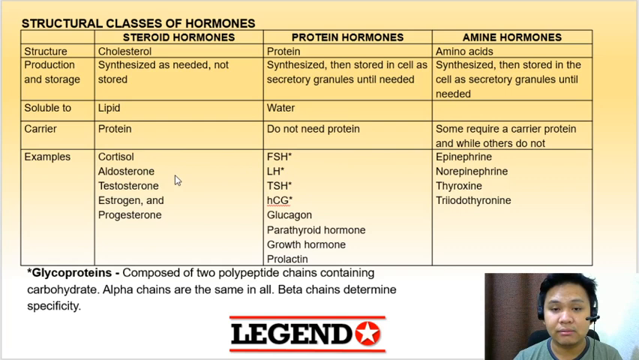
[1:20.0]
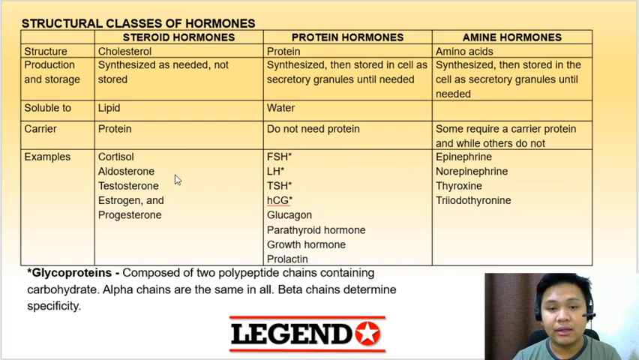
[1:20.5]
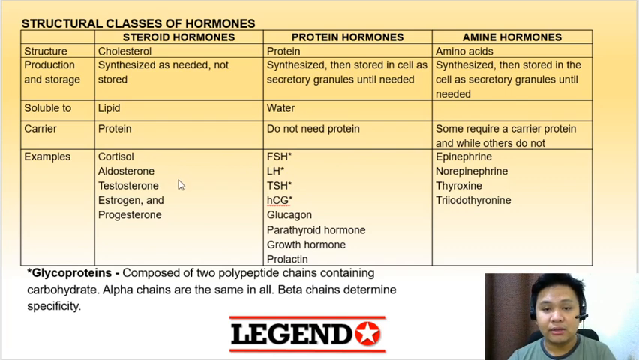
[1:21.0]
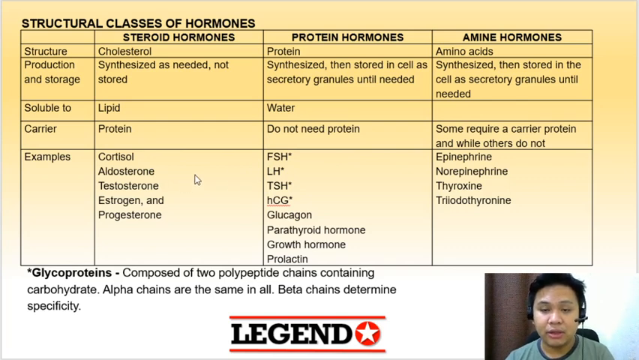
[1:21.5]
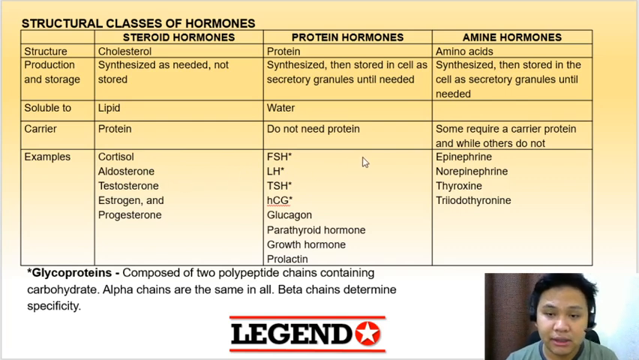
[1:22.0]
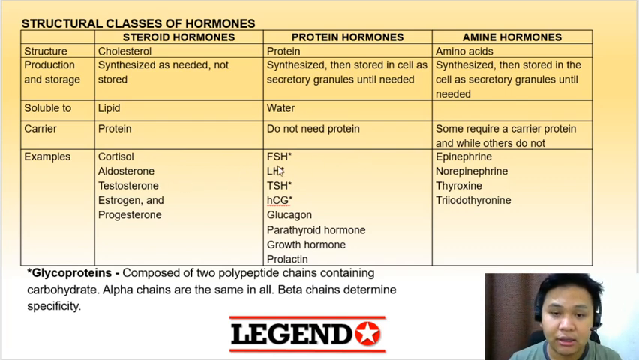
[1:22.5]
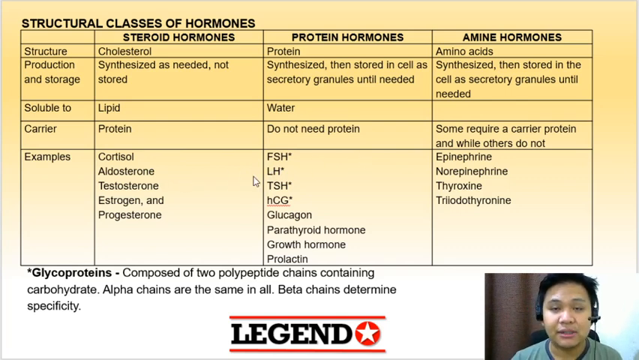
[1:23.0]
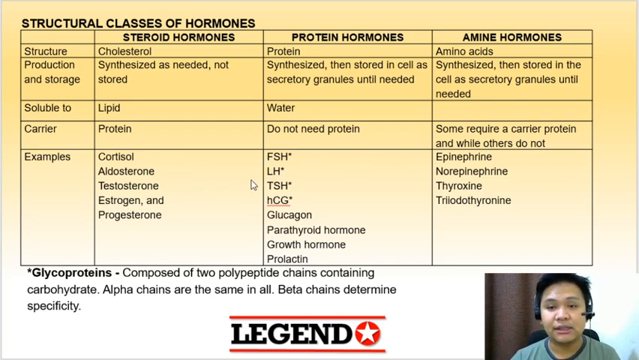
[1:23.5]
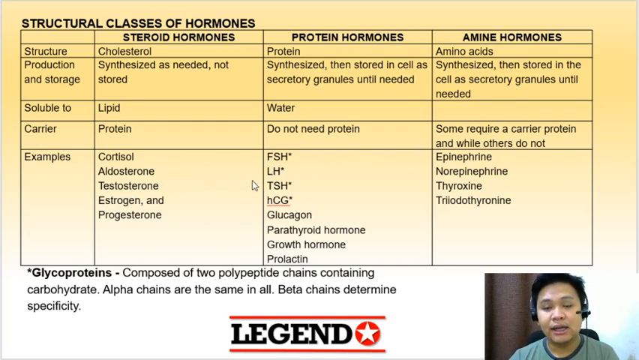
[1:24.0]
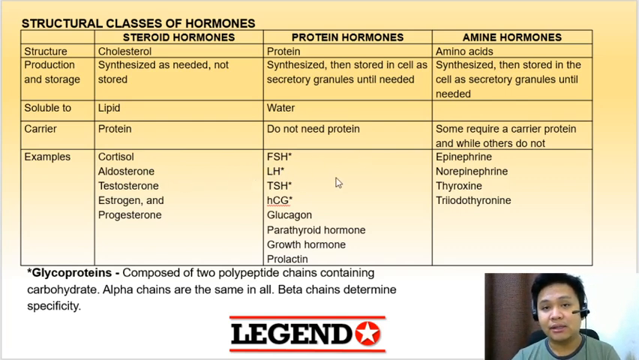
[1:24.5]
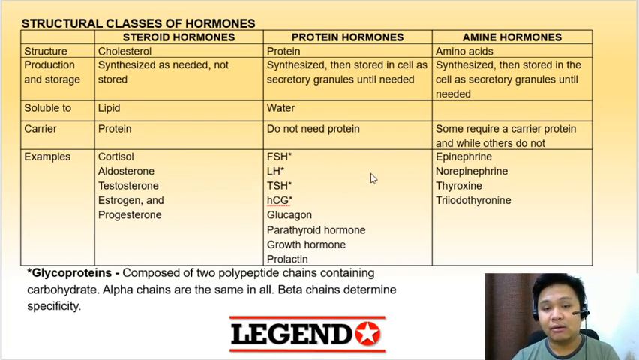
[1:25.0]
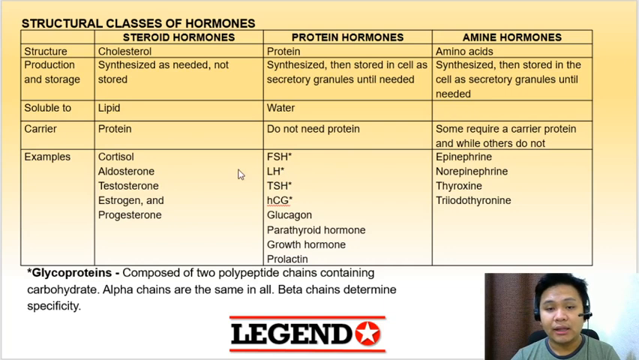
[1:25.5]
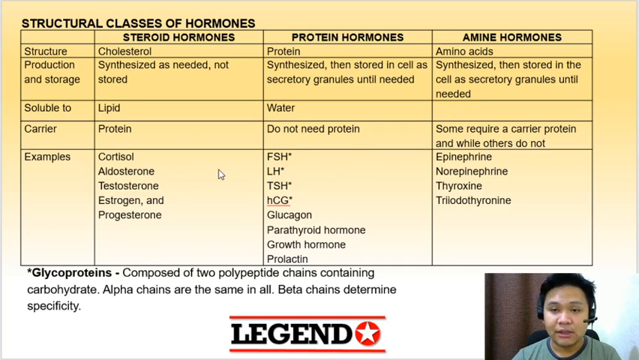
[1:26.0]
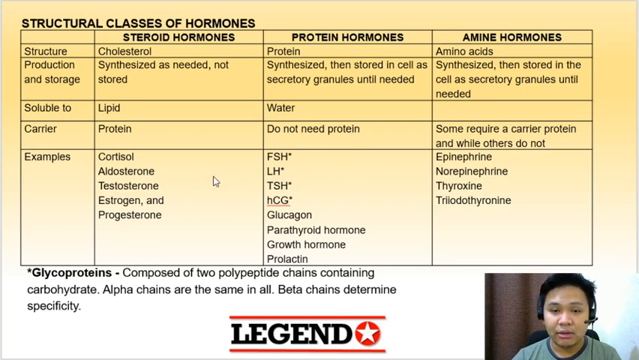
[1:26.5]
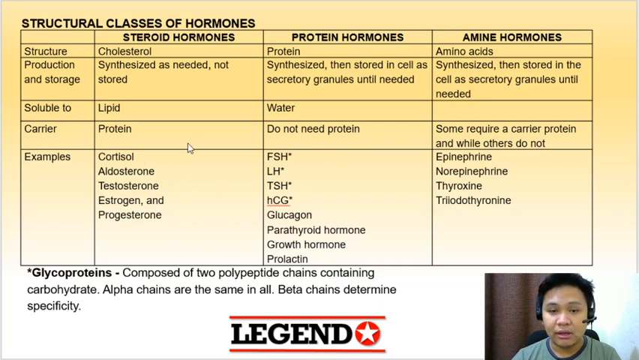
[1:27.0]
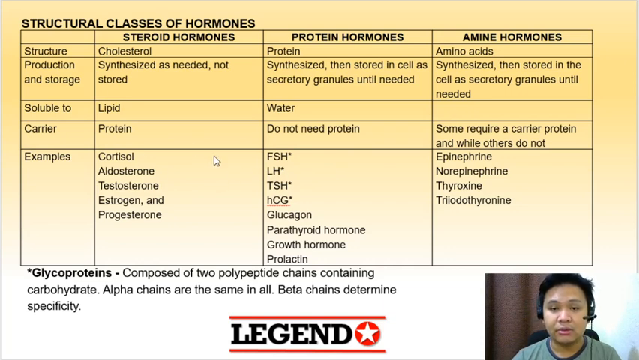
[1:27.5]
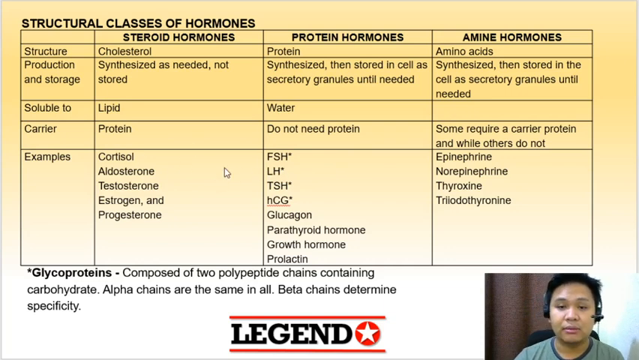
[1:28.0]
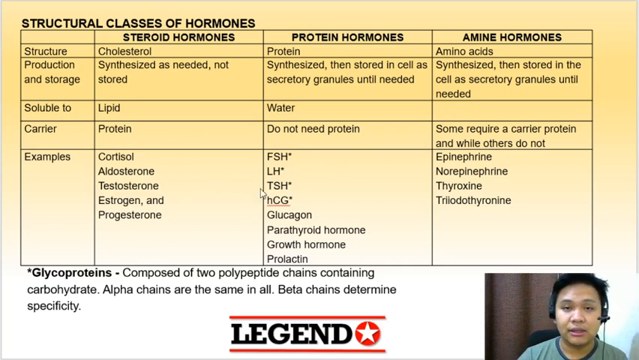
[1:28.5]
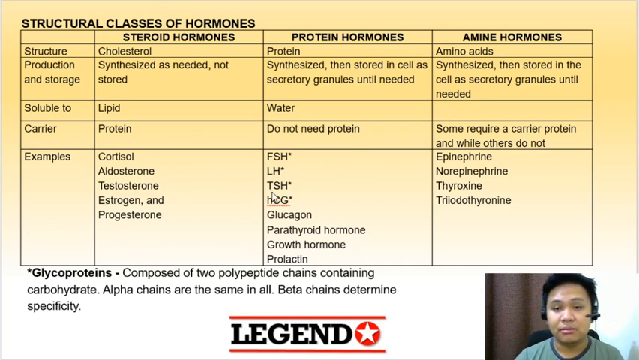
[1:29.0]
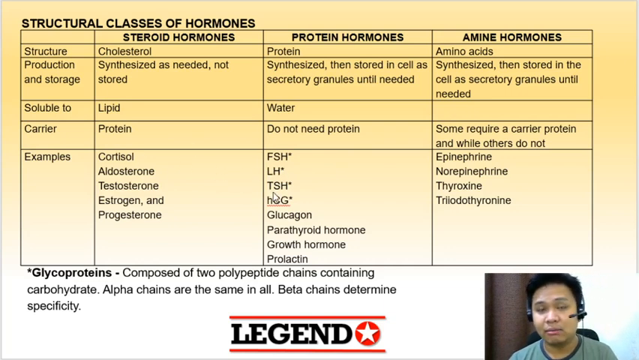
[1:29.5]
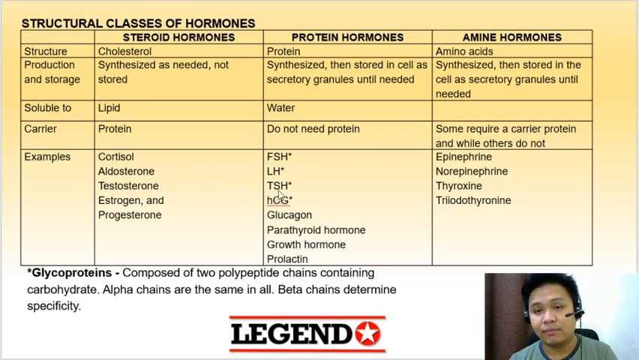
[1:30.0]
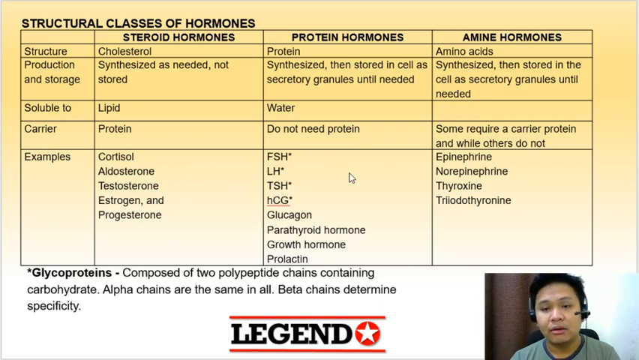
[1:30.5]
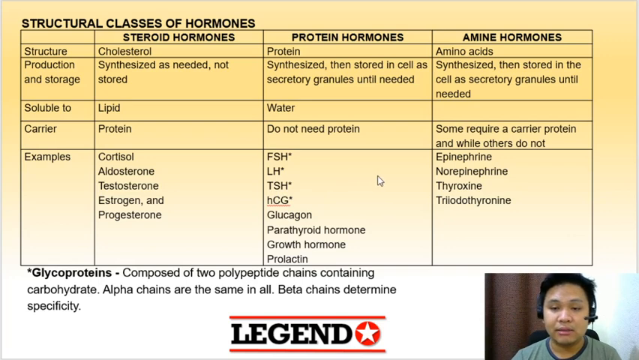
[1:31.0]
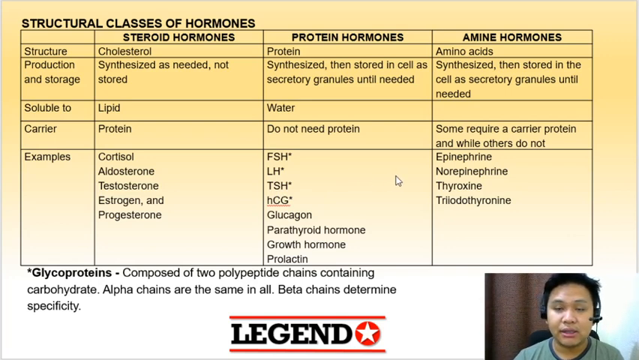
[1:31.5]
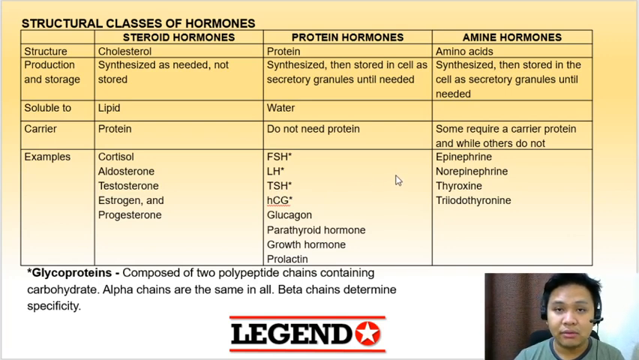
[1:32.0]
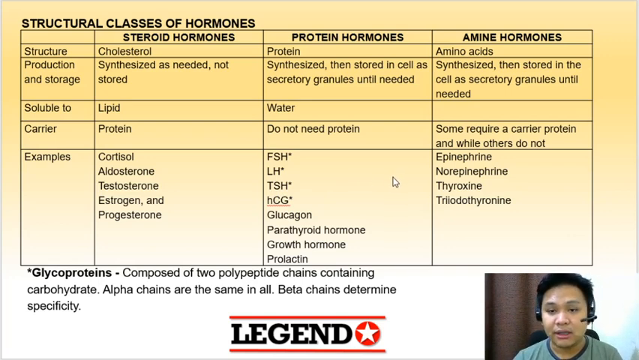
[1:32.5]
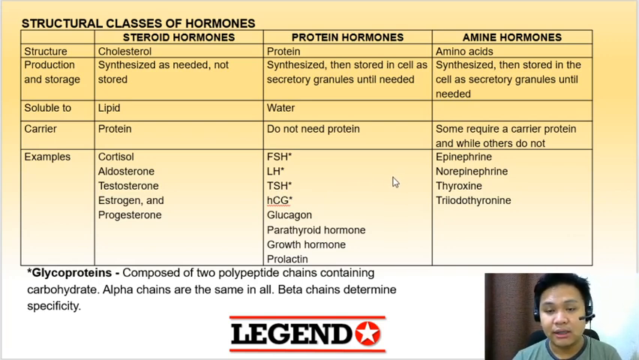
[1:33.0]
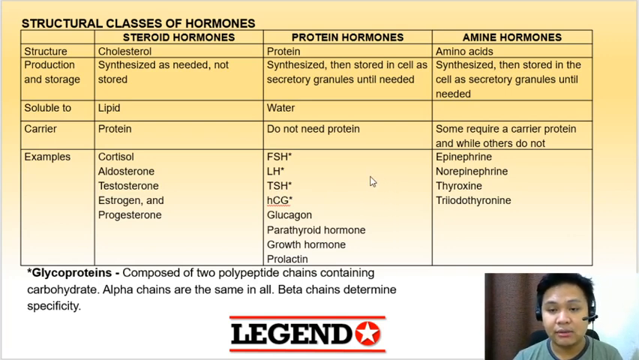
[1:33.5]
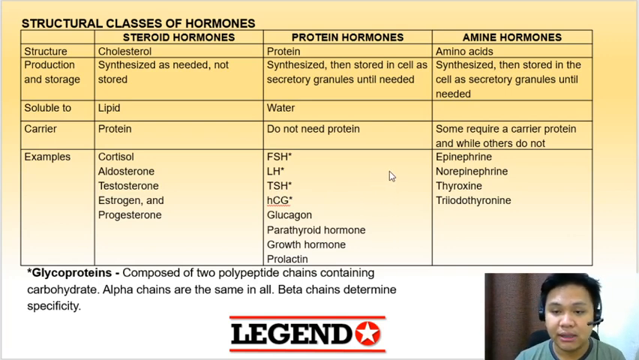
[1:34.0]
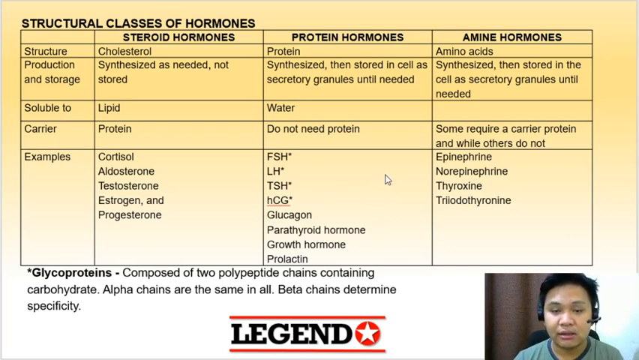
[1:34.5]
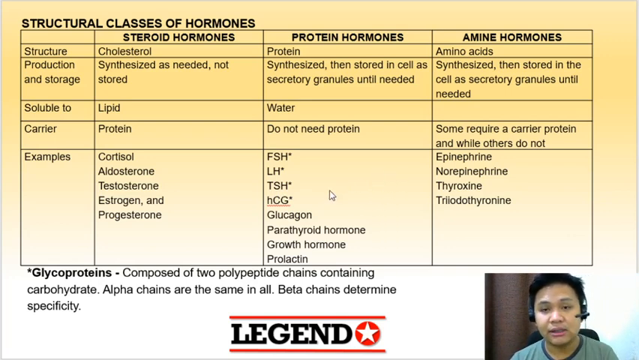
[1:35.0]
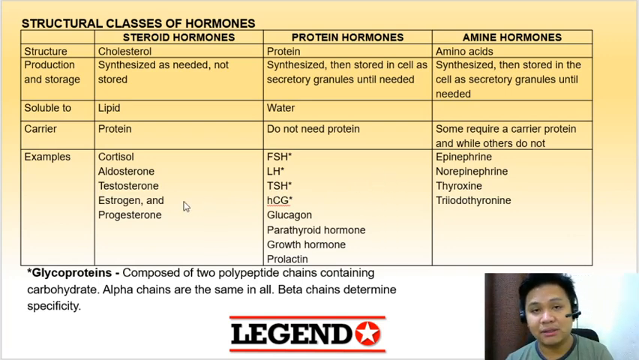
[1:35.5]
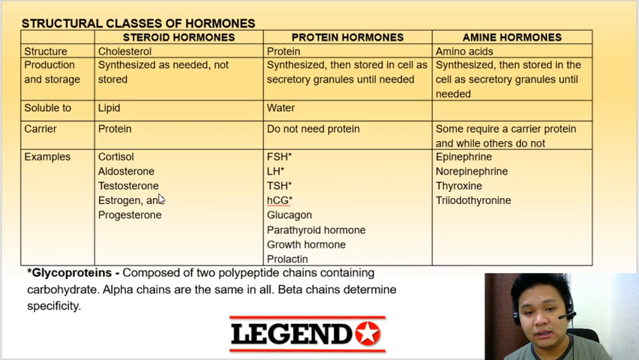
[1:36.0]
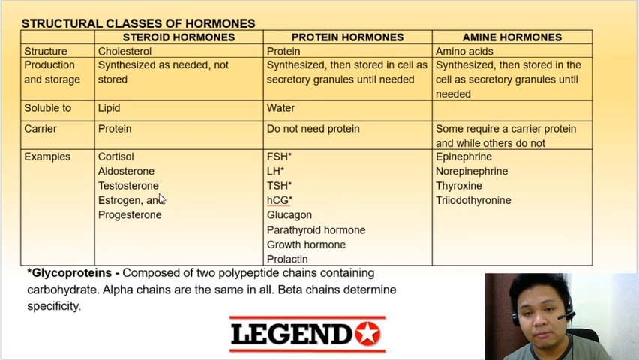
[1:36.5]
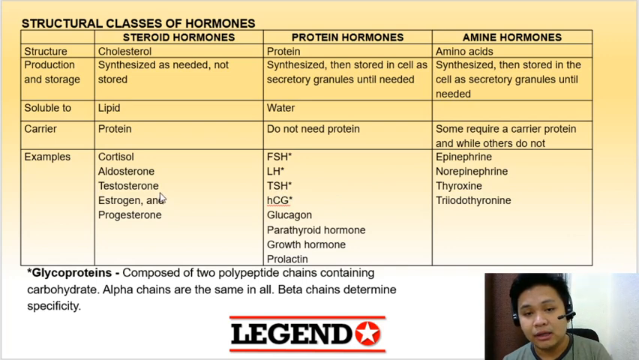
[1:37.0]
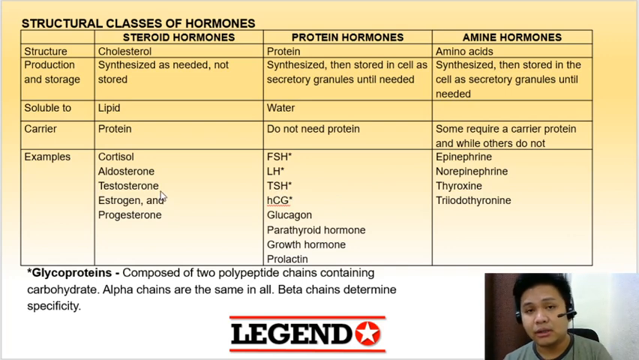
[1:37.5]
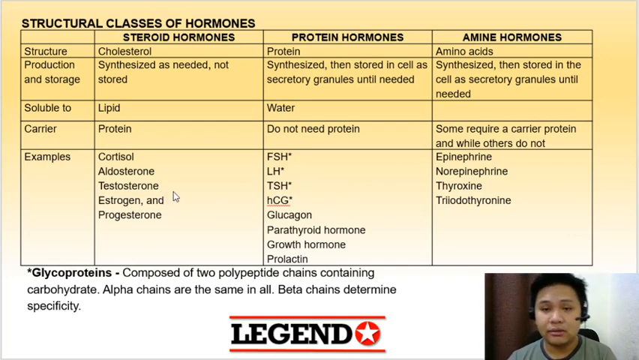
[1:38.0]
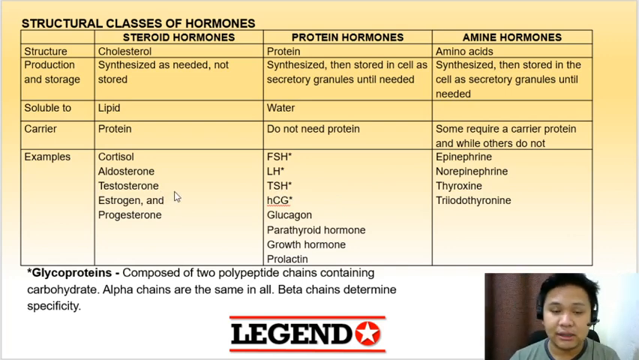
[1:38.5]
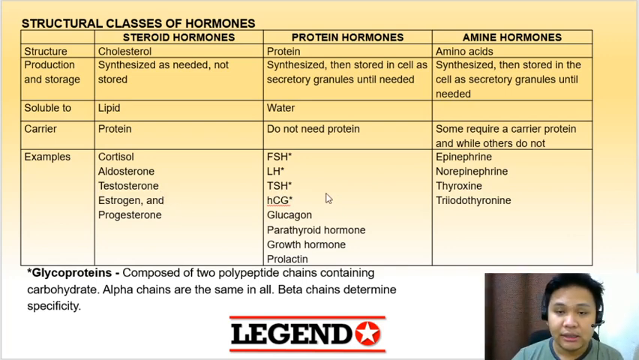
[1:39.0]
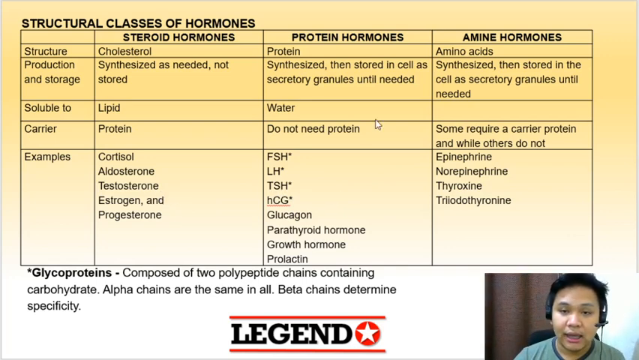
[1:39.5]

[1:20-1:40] The table on the structural classes of hormones covers steroid hormones, protein hormones and amine hormones, giving the structure, production and storage, solubility, carrier and many examples of each. At the bottom of the screen is a logo with the word "legend"; next to the word is a red circle containing a white five-pointed star, and the word and star have a red line above and a red line beneath them. In the bottom right part of the screen, a man appears to be talking about the information in the table. The table stays on screen for quite some time, and the man appears to be using a mouse, as the mouse arrow moves around the screen.